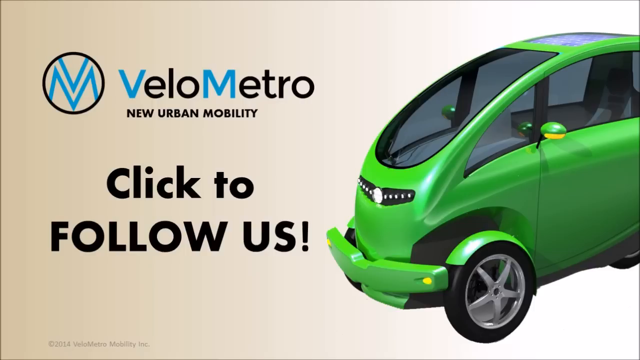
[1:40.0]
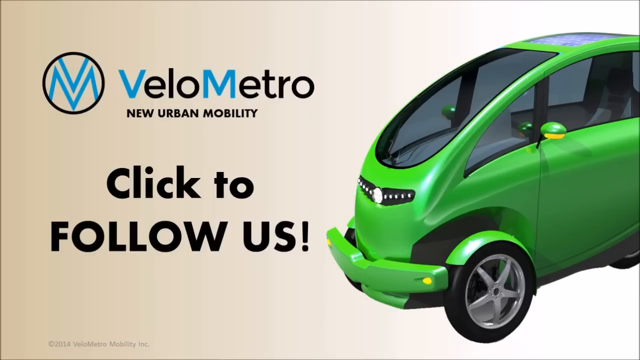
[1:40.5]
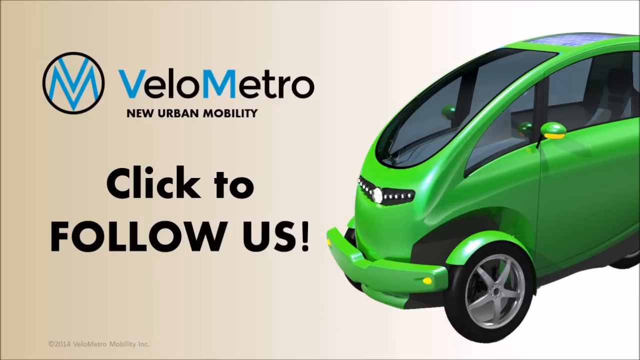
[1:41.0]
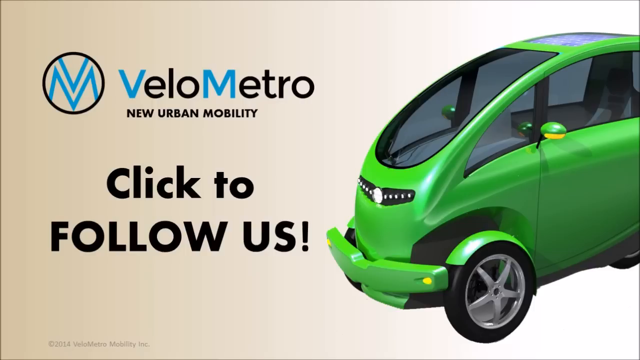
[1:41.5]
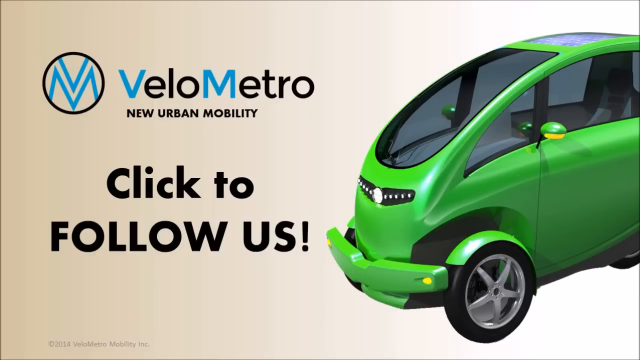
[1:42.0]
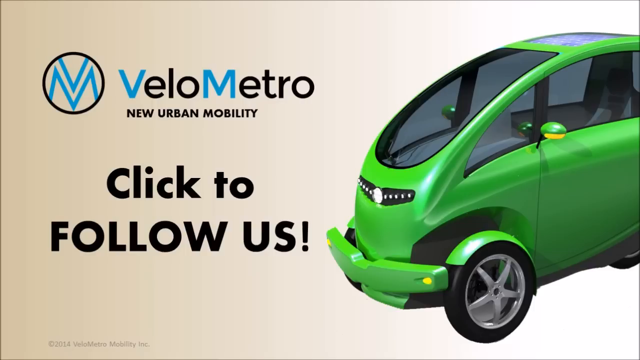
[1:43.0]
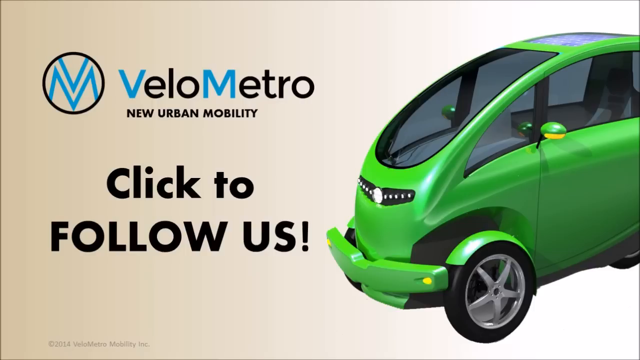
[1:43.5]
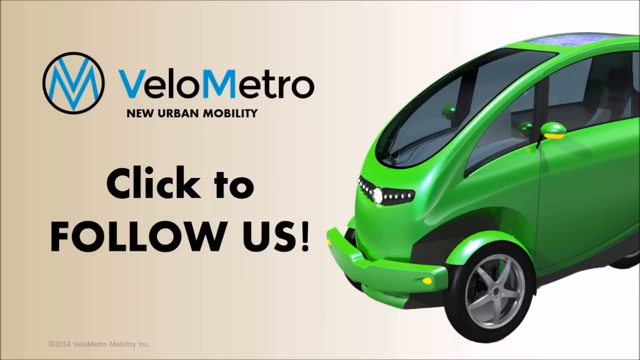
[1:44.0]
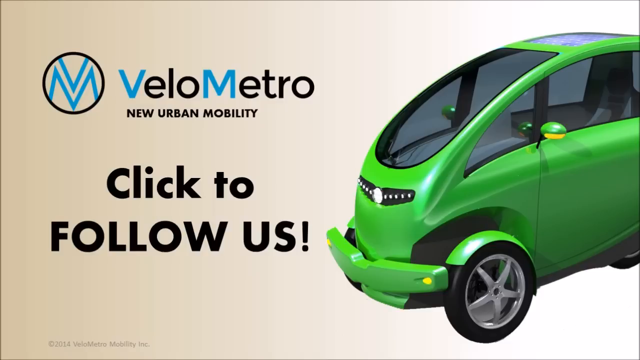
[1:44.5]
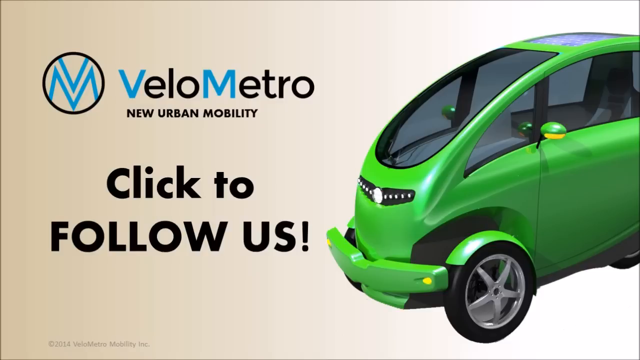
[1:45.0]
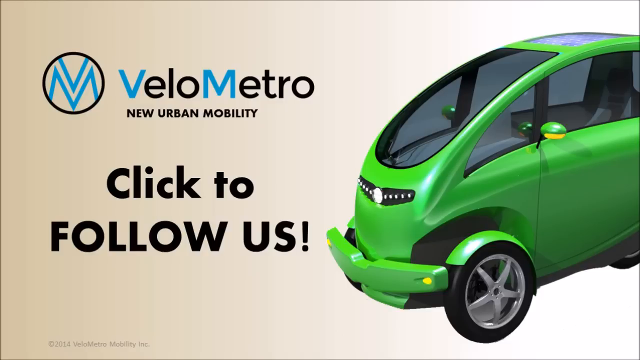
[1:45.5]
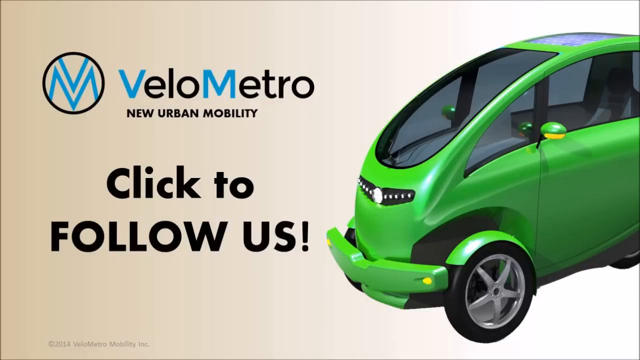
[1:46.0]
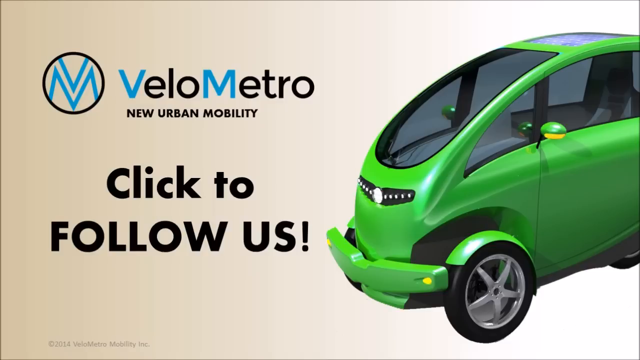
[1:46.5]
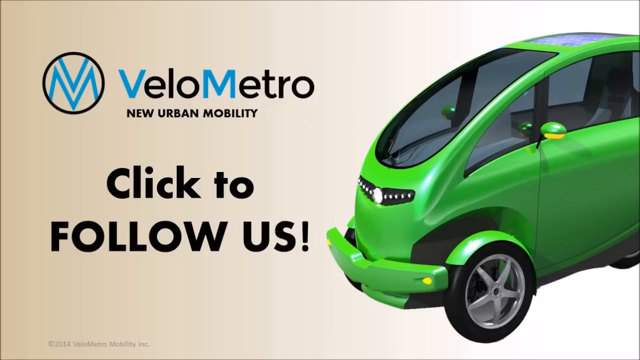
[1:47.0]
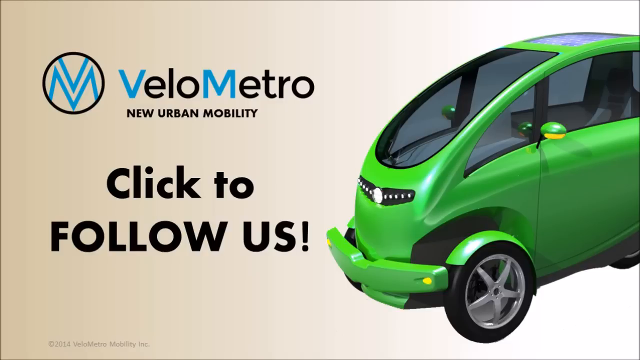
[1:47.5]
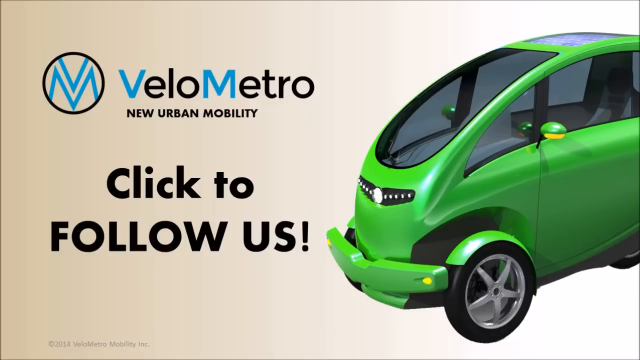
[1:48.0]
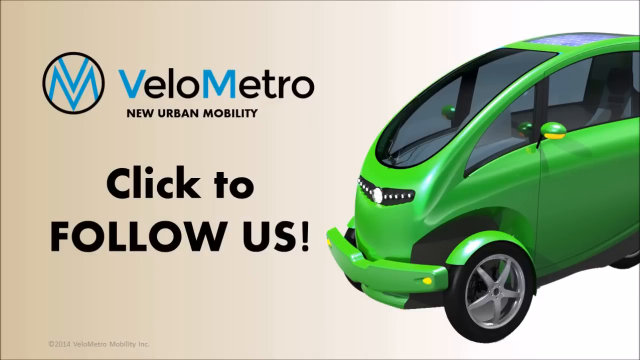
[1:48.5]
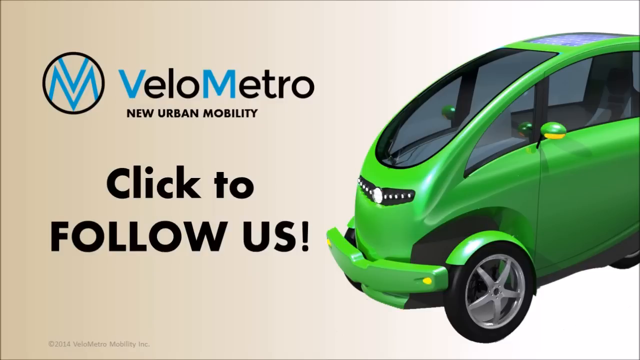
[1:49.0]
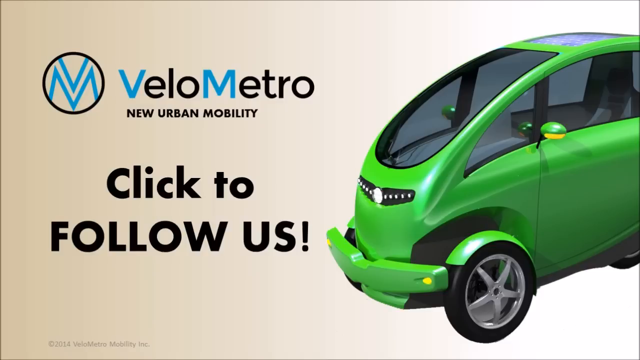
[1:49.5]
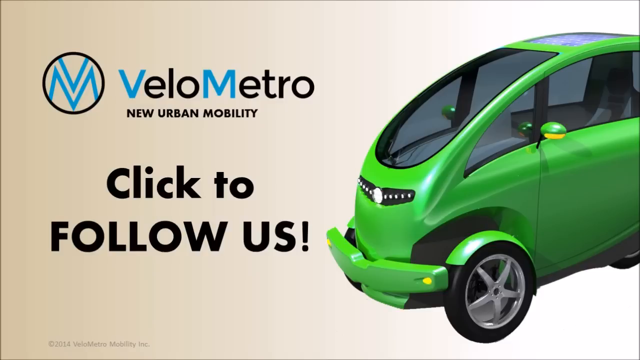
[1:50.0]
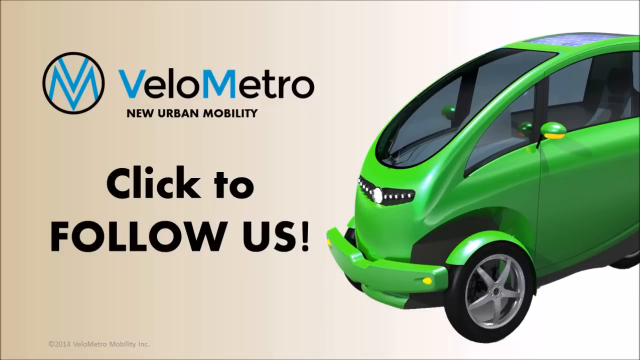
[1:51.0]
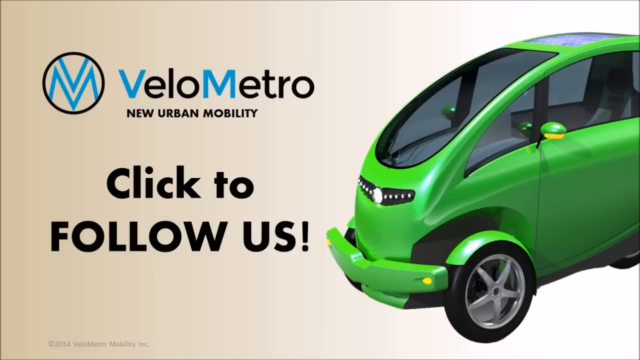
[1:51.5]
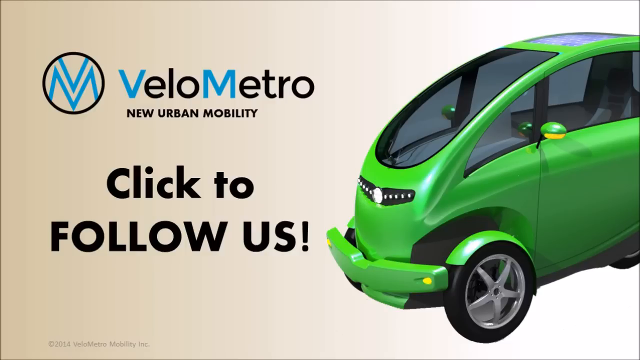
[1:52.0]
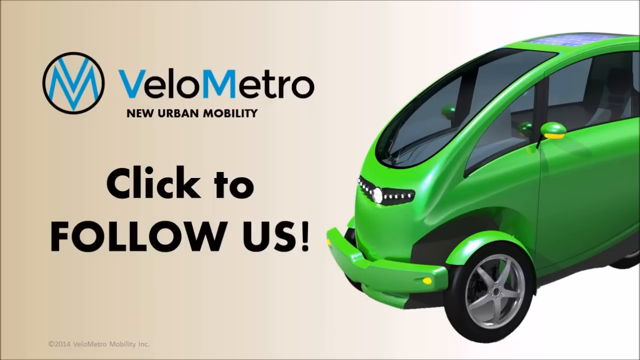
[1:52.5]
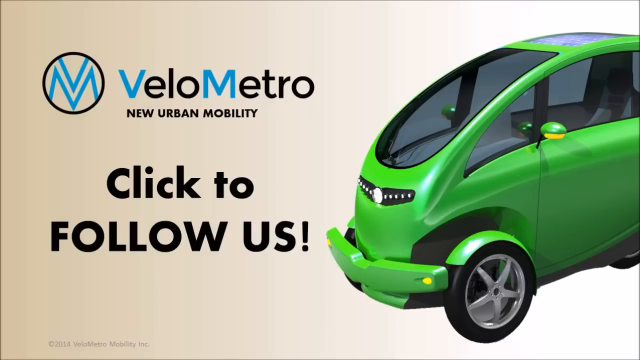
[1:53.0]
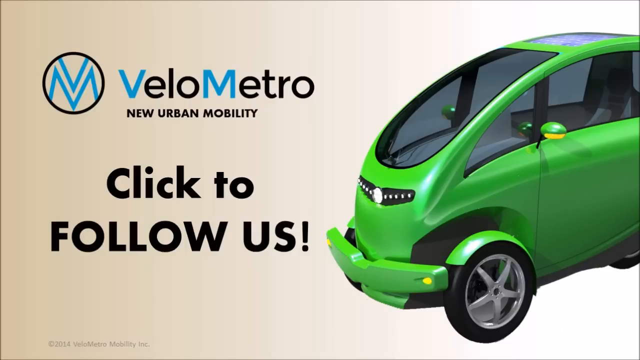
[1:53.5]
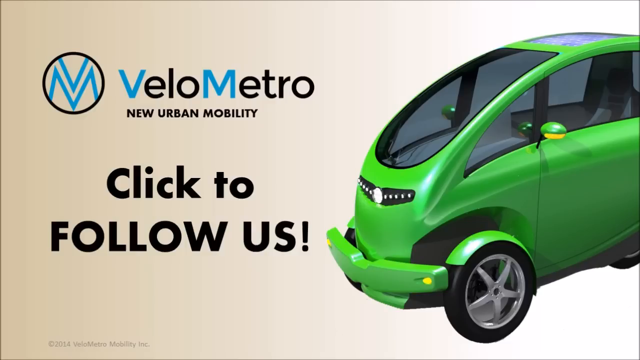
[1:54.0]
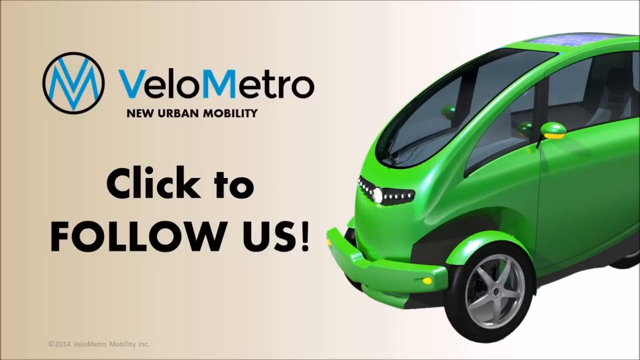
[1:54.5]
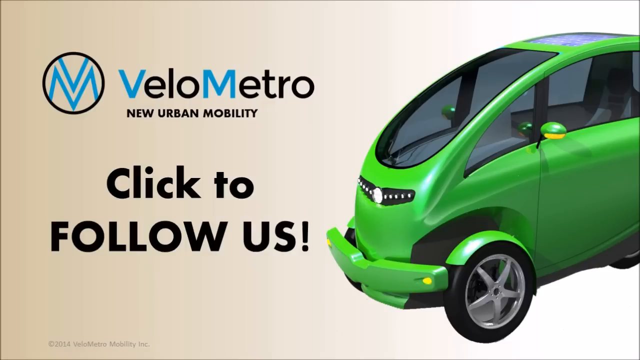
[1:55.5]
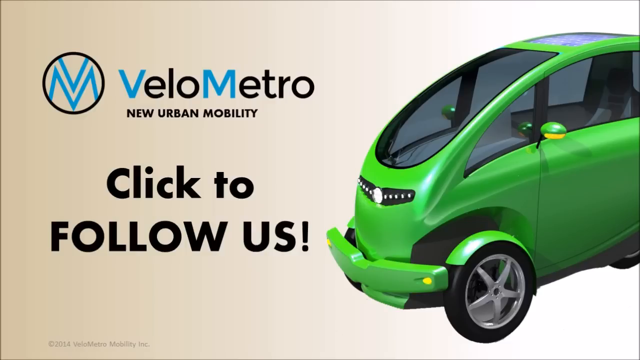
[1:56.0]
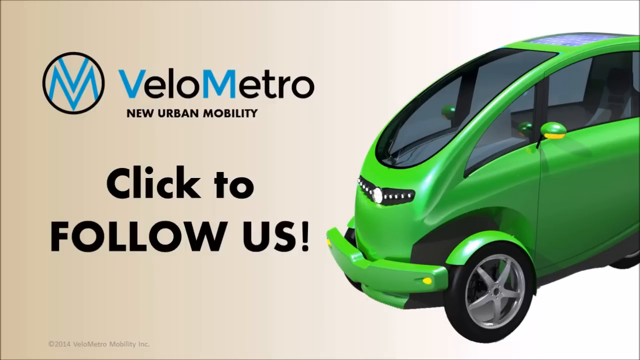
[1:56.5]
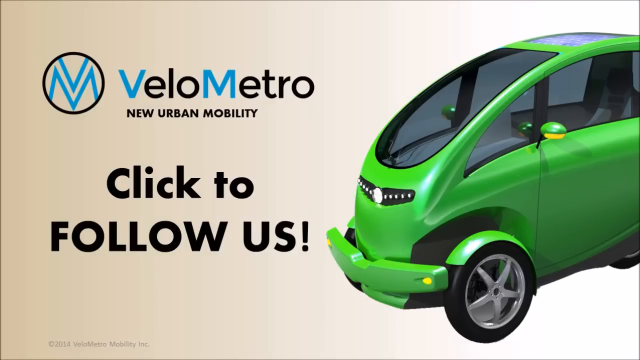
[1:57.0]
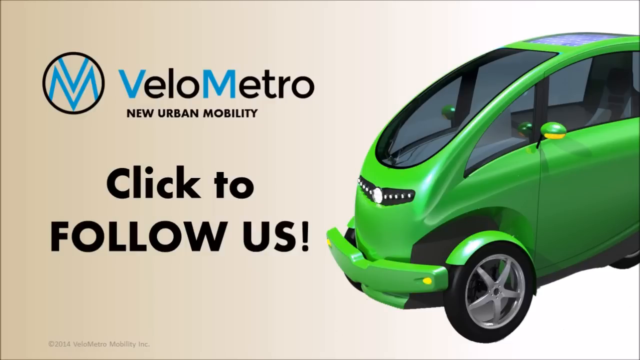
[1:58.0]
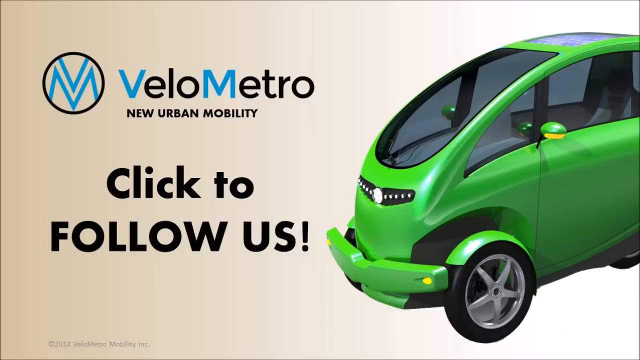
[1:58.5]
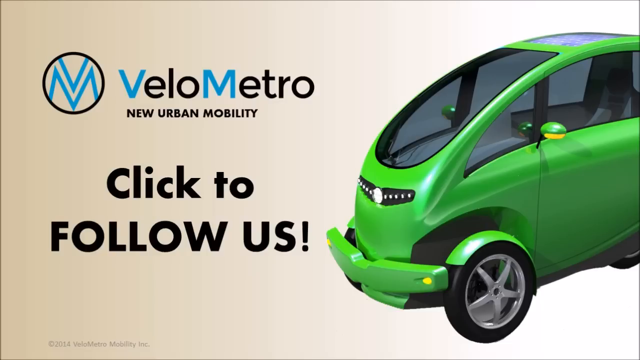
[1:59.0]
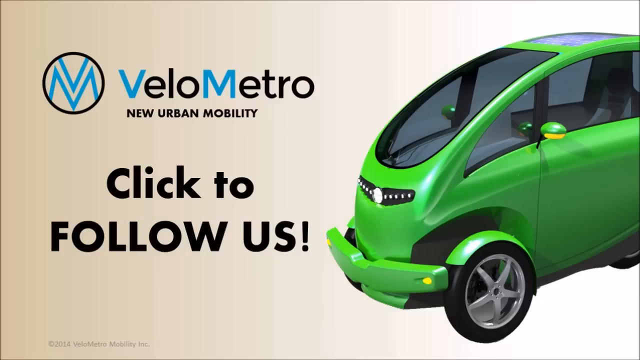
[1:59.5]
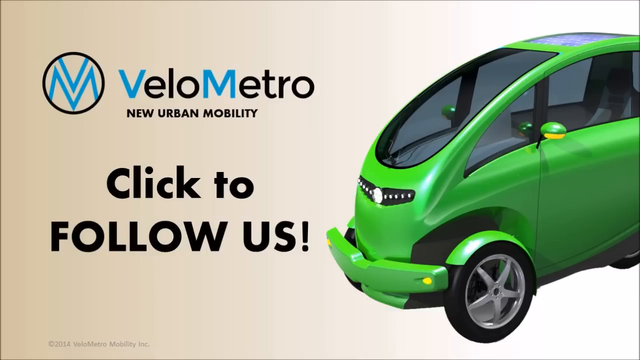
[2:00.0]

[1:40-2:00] A screen shows "Velo Metro New Urban Mobility" with a symbol of a blue V over a blue M in a black circle. Text reads "click to FOLLOW US!" with "follow us" in all caps. A picture shows the car, a neon green one-seater with a tire in the back and two tires in the front. The bumper is very small and exactly the same color as the green car. The front windshield is very narrow and curves back over the top of the car, almost to the driver's head. There is a lot of visibility on the sides as well, with two windows on the side, one in front of the main window. The car looks very tiny and very sleek.